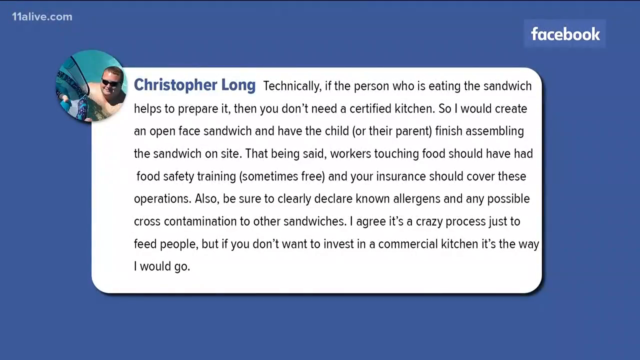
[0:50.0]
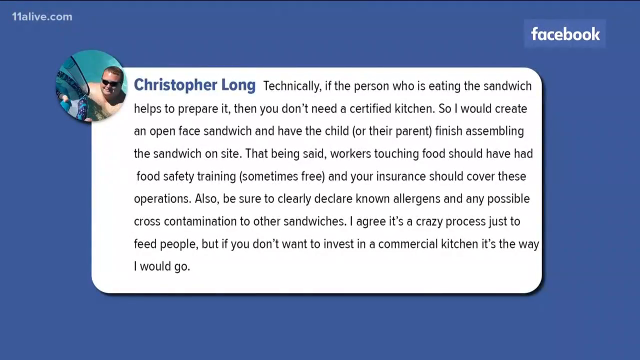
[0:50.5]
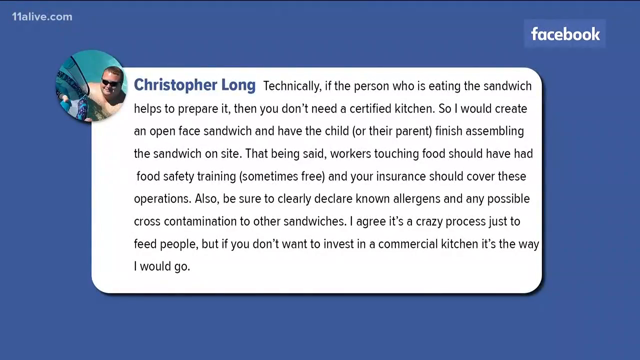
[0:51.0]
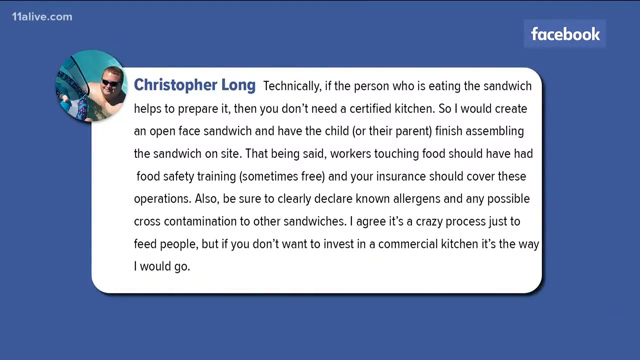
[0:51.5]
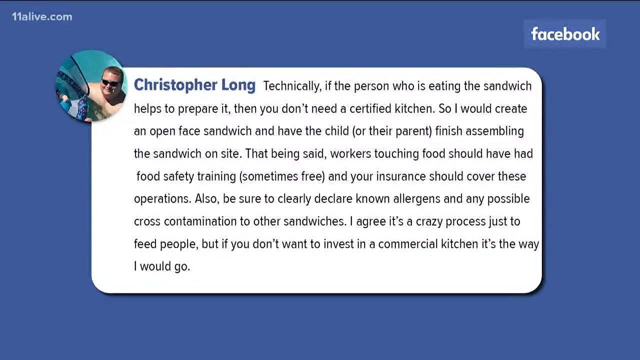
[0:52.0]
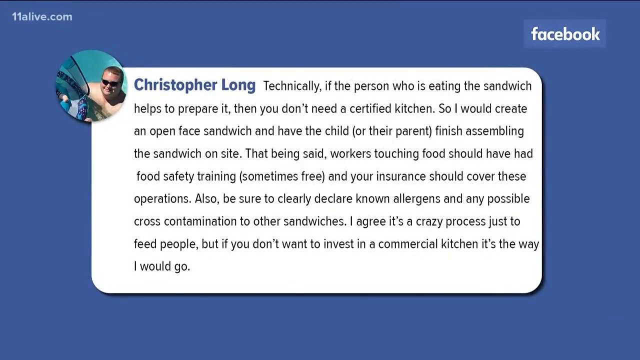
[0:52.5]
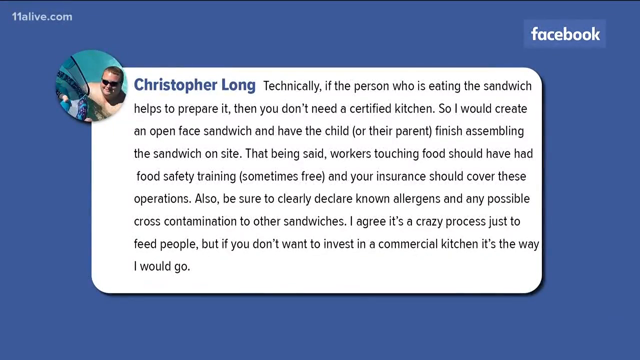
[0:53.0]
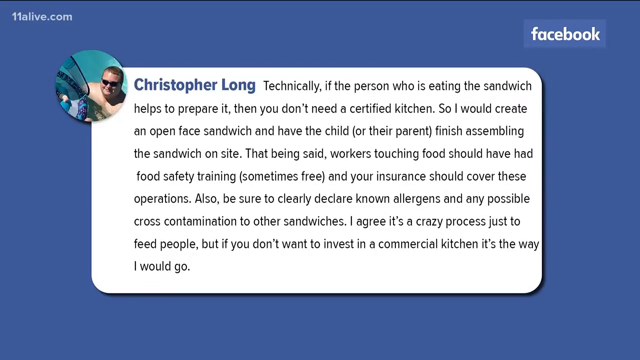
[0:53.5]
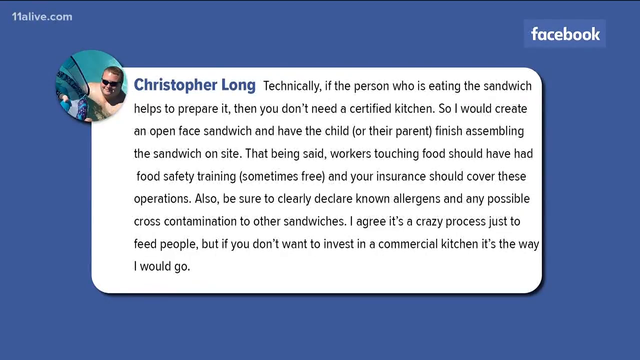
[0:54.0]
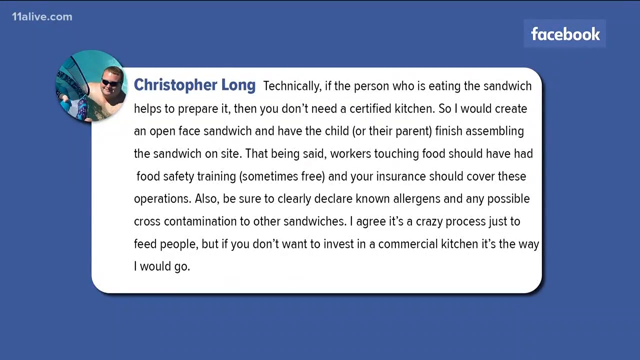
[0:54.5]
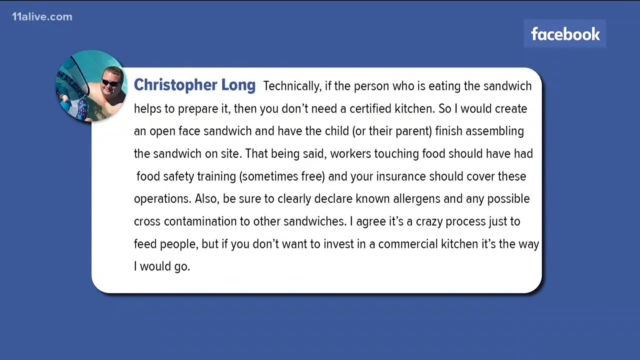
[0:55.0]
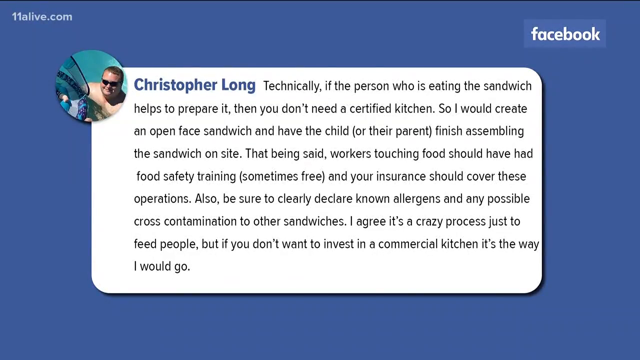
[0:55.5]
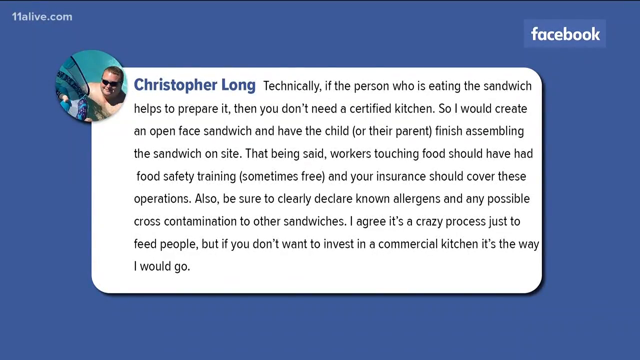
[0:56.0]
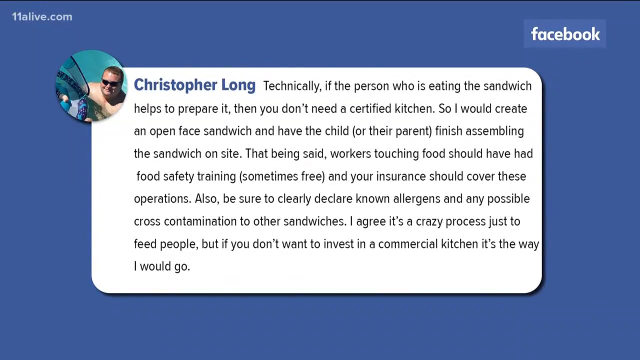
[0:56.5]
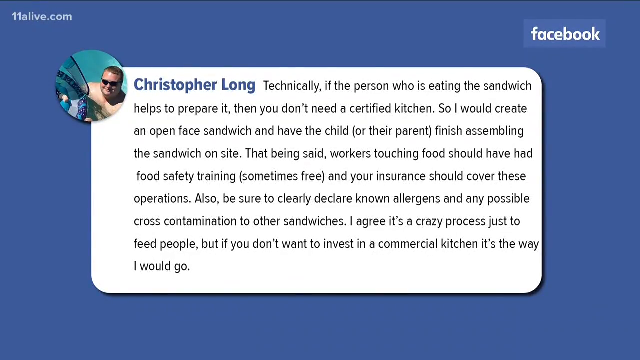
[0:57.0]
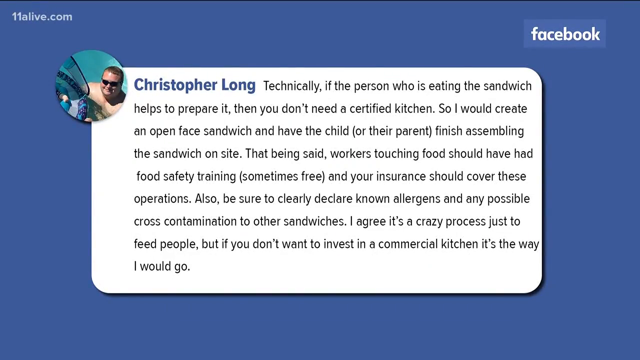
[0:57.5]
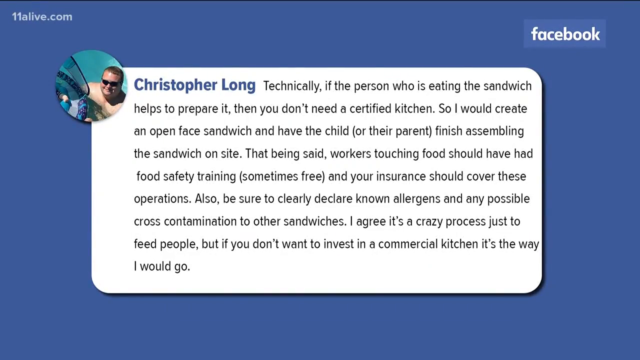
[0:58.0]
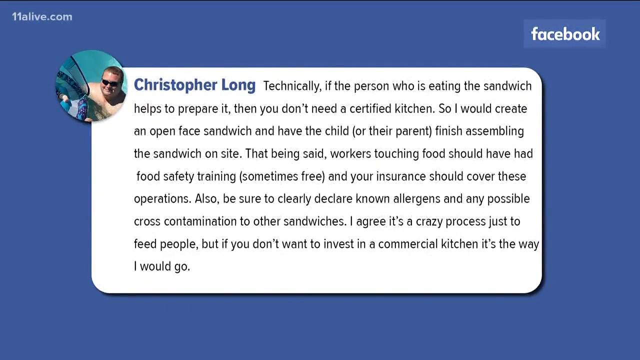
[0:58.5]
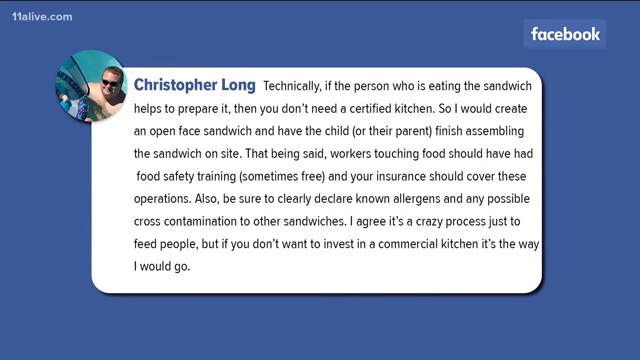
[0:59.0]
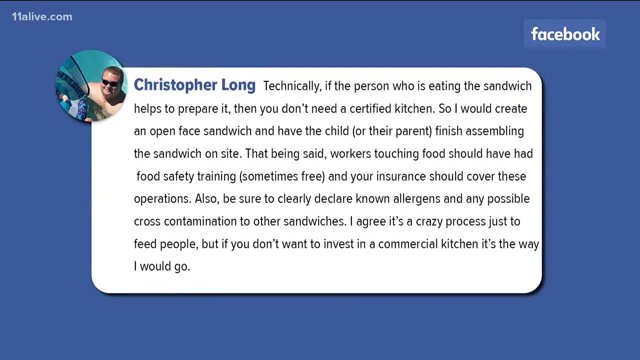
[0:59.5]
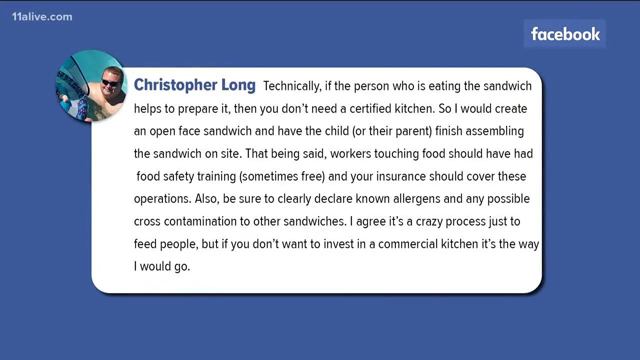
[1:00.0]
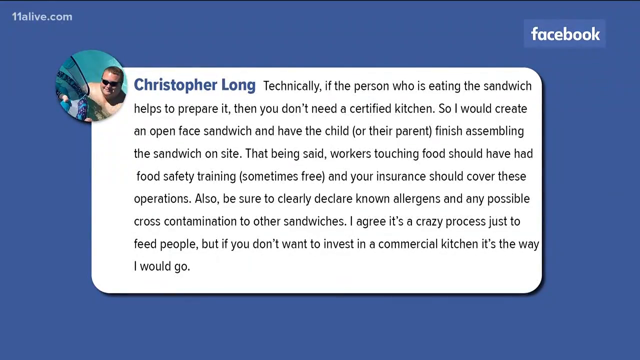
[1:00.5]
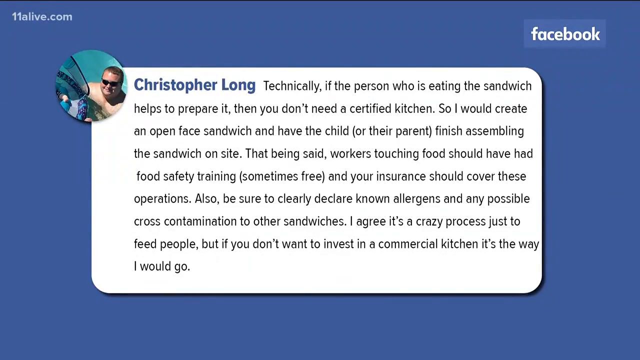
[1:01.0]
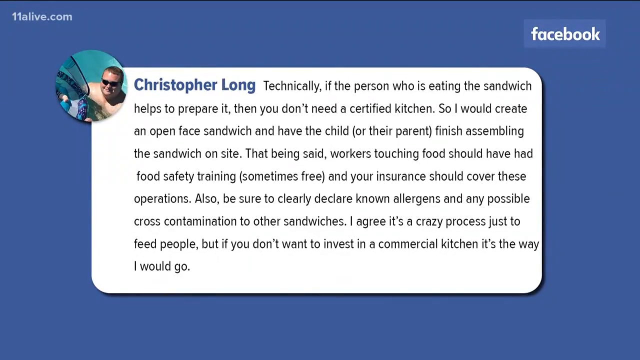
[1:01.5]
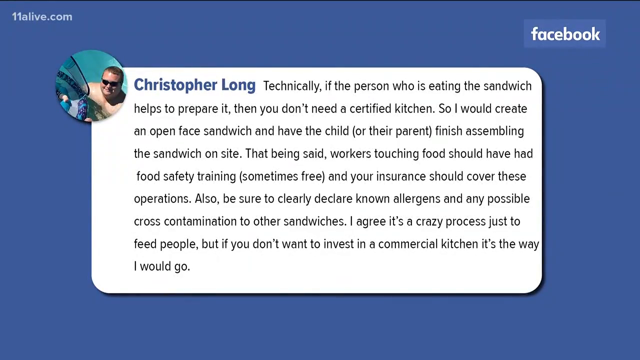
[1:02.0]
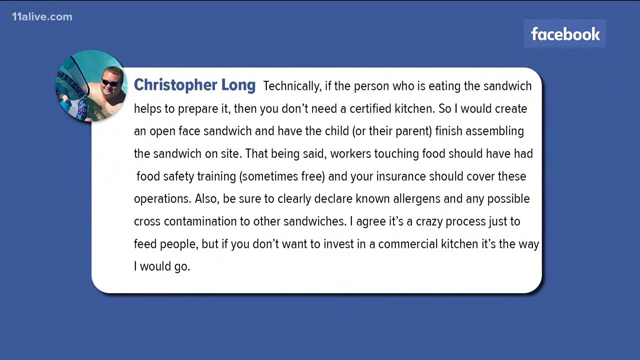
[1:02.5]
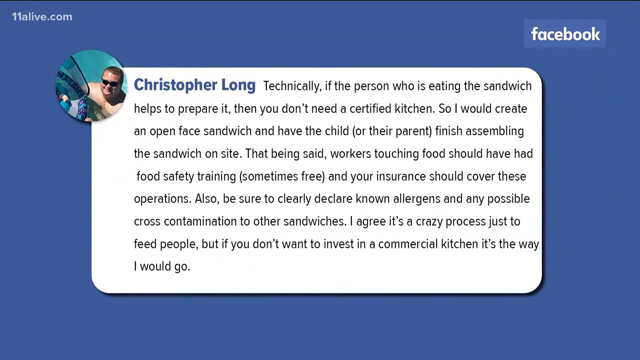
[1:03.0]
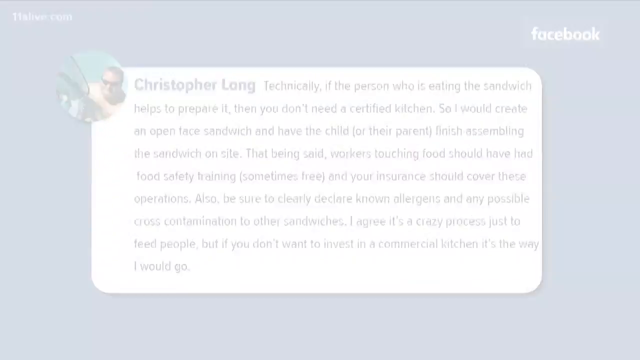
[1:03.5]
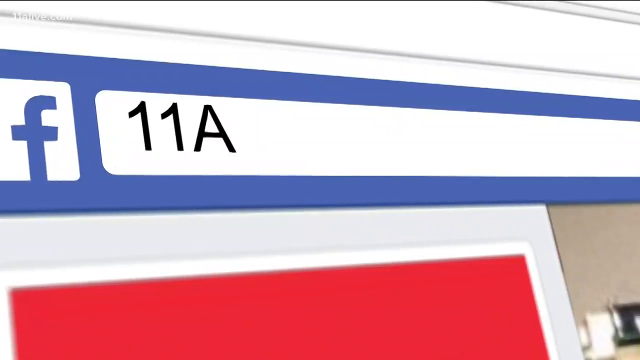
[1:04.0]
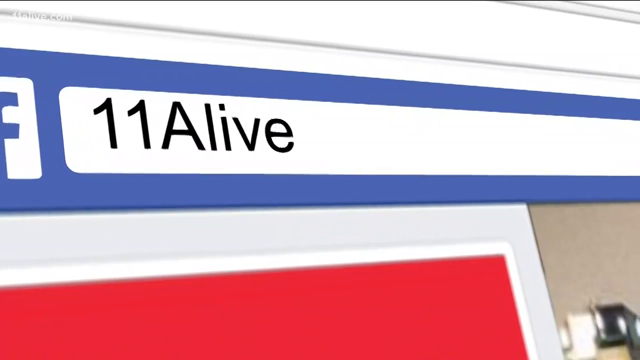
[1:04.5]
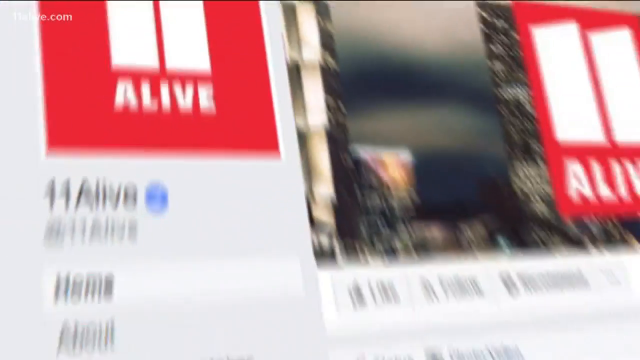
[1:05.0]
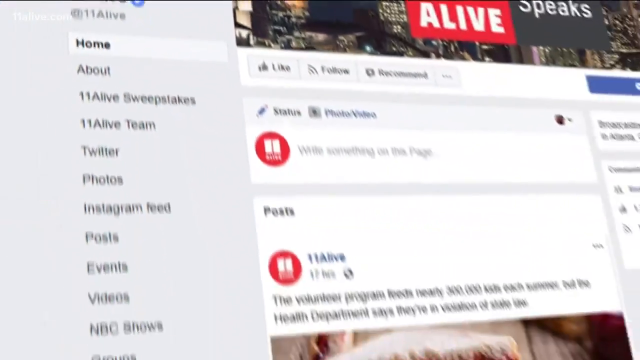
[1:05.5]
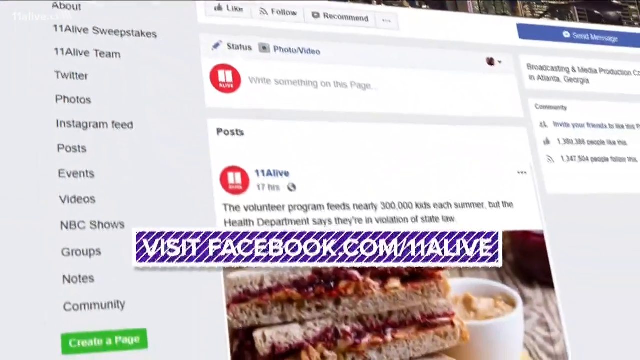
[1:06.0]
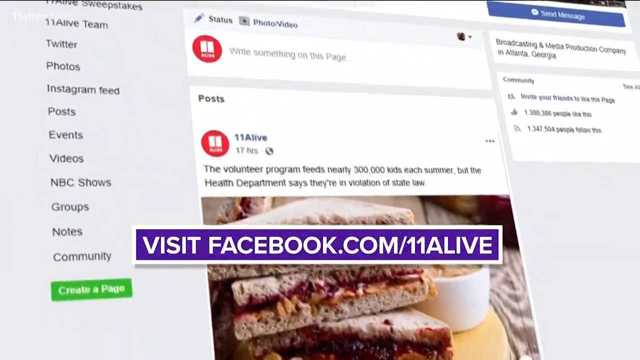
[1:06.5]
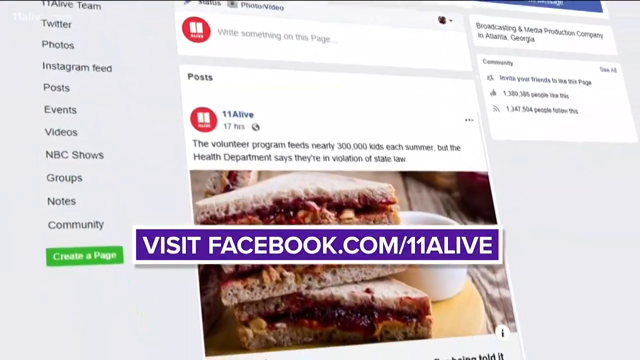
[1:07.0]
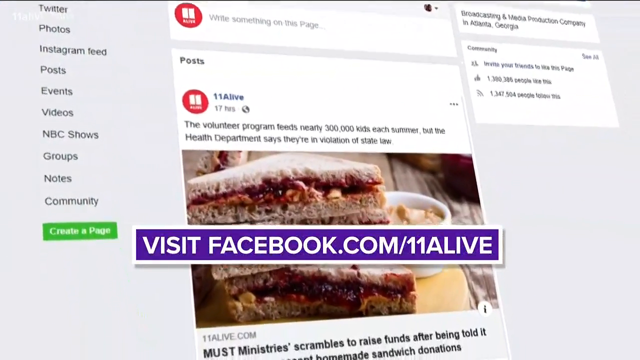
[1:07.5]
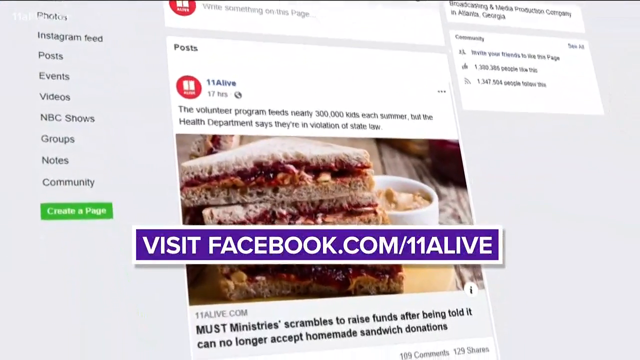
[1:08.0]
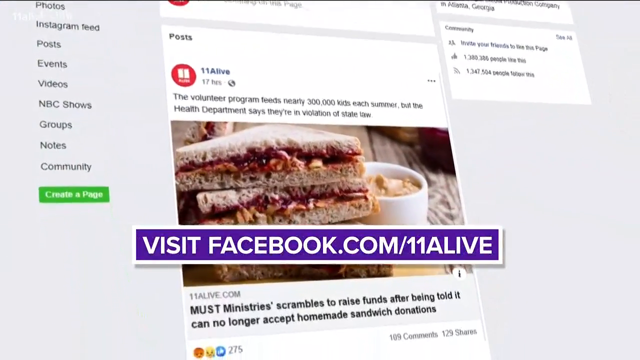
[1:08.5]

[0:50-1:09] A longer comment by Christopher Long is shown. It says that technically, if the person eating the sandwich helps to prepare it, a certified kitchen is not needed, so he would create an open-faced sandwich and have the child or parents finish assembling it on site. It adds that workers touching food should have had food safety training, to clearly declare known allergens and any possible cross-contamination to other sandwiches, and that while it is a crazy process just to feed these people, this is the way he would go if you don't want to invest in a commercial kitchen.